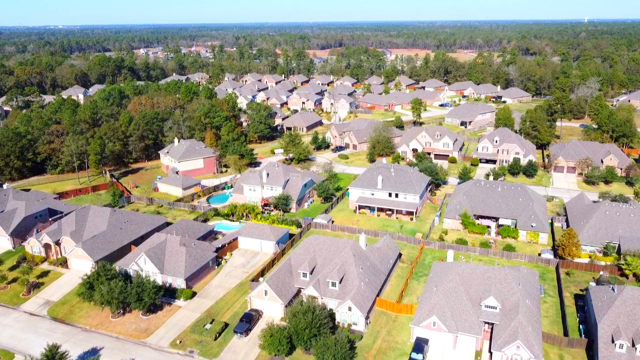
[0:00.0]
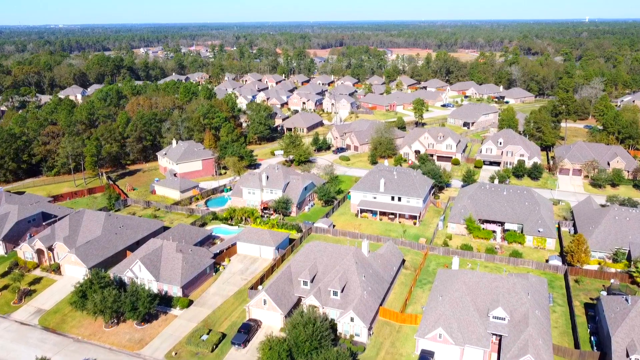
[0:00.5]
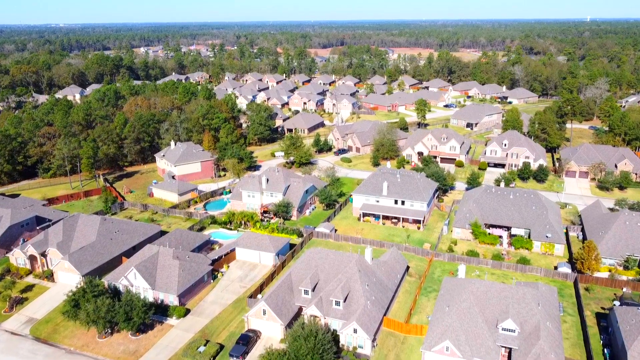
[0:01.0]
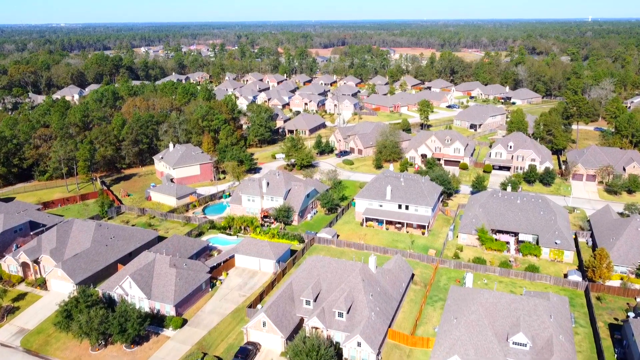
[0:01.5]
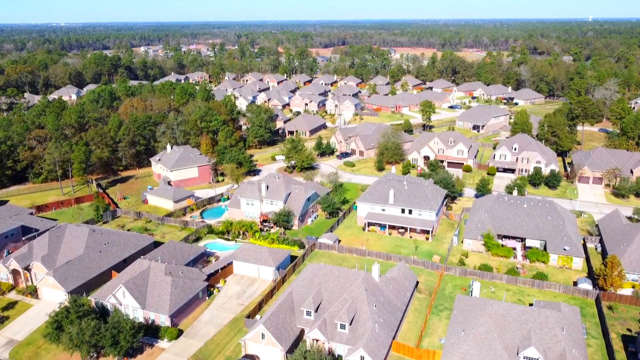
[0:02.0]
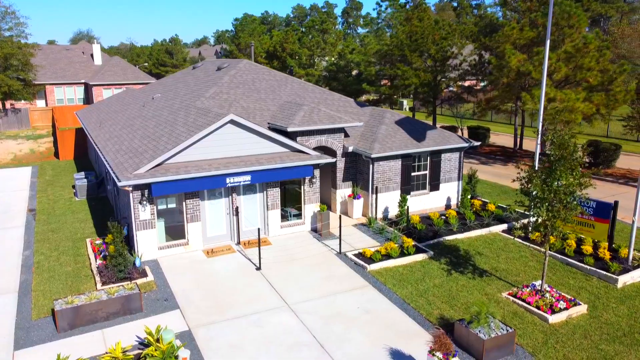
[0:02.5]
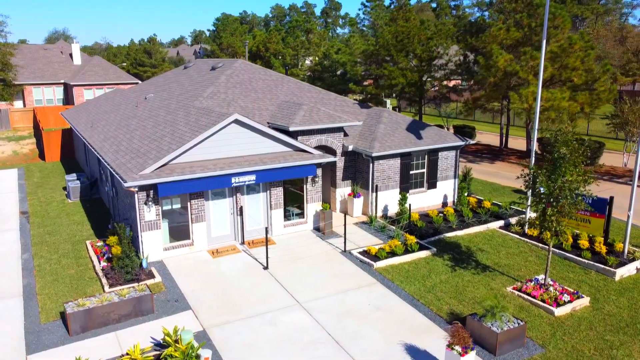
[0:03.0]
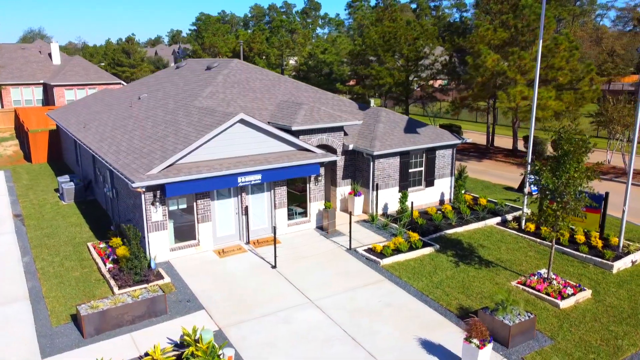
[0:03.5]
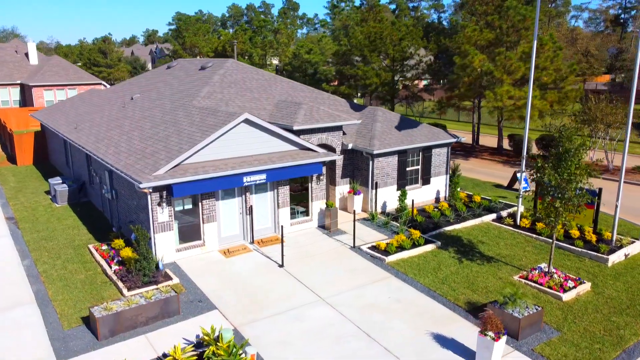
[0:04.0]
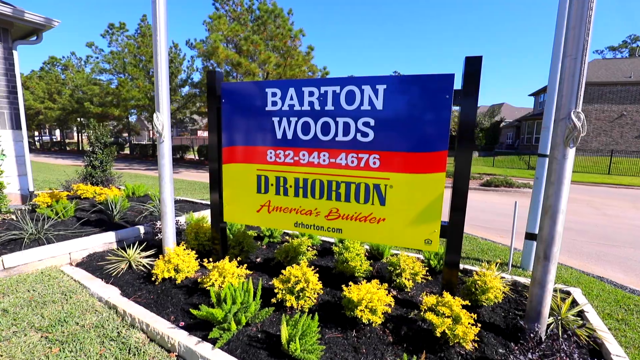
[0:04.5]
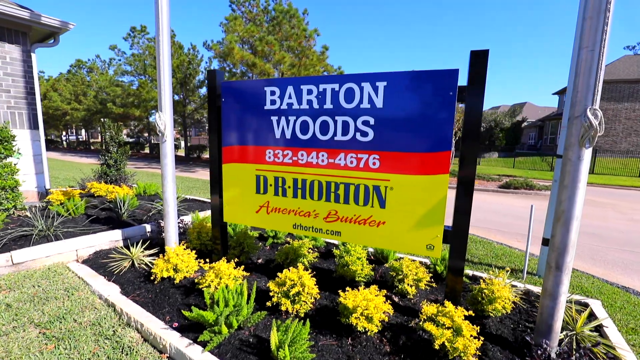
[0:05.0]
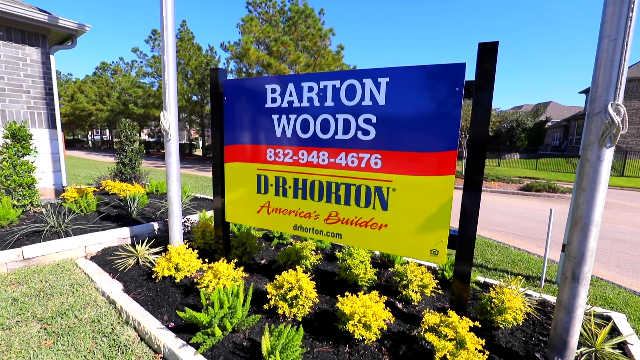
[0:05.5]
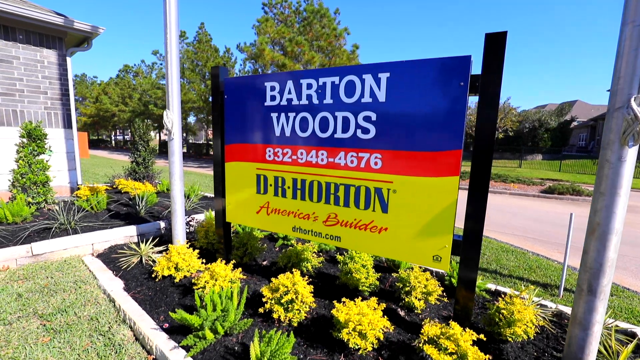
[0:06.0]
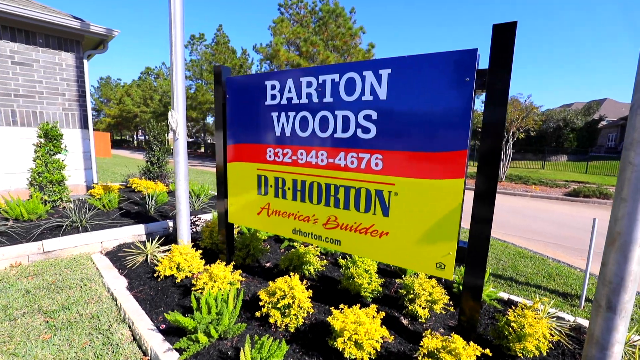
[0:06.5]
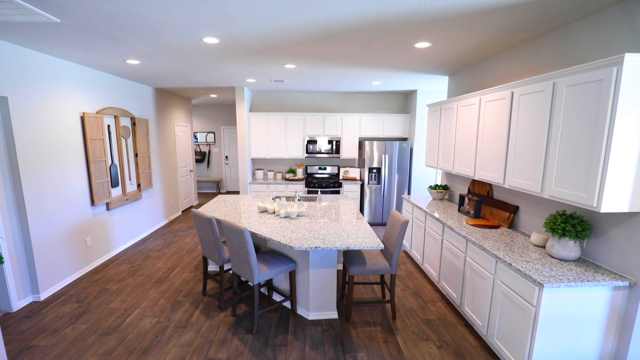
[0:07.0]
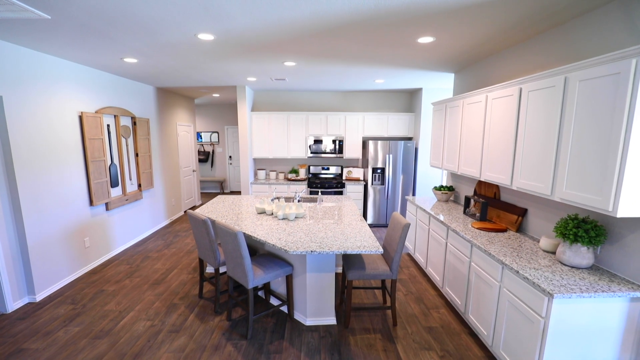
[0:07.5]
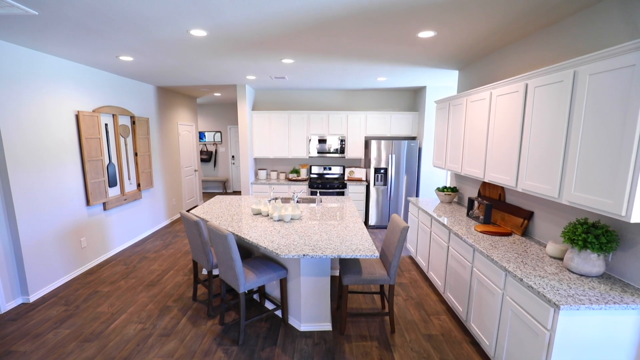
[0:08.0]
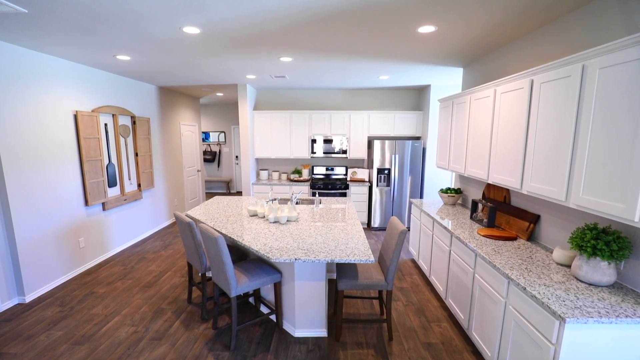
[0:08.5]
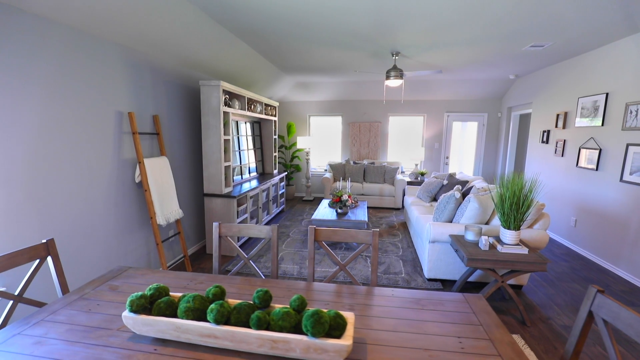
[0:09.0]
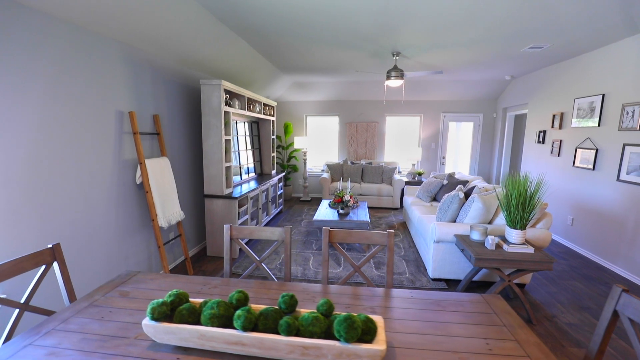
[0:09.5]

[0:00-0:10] A collection of properties appears, all of them with gray roofs. One property is shown, which looks like a very beautiful house, with a garden full of flowers and a lot of green. A board reads "Bastogne Woods" with a telephone number at the bottom, along with D.R. Horton America's Builder and a web link. The video appears to be advertising houses for people to buy. The inside of the house is then shown, starting with the kitchen, which has white boards; everything in the kitchen looks unique and beautiful.